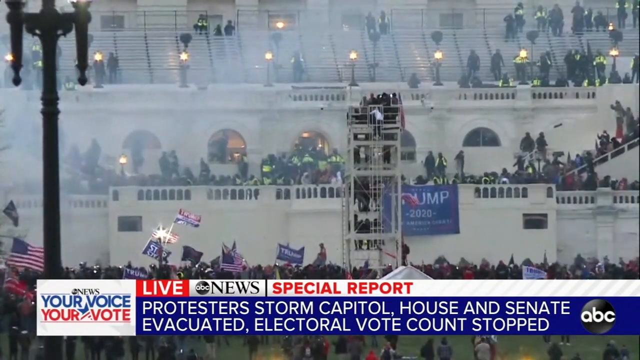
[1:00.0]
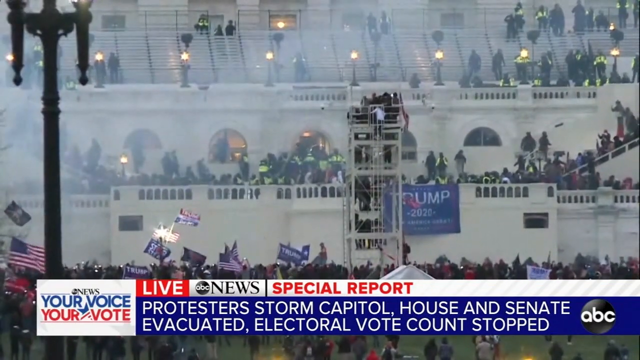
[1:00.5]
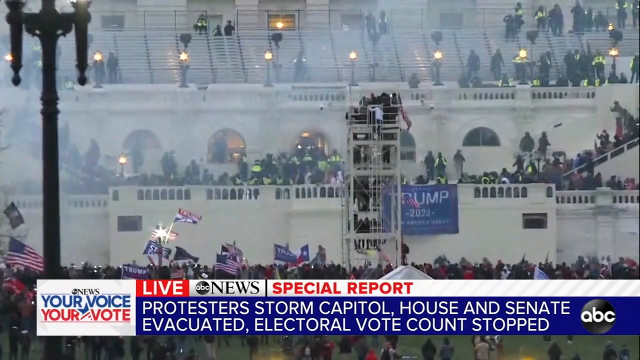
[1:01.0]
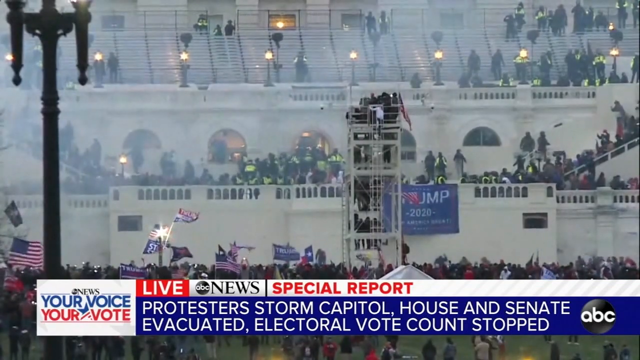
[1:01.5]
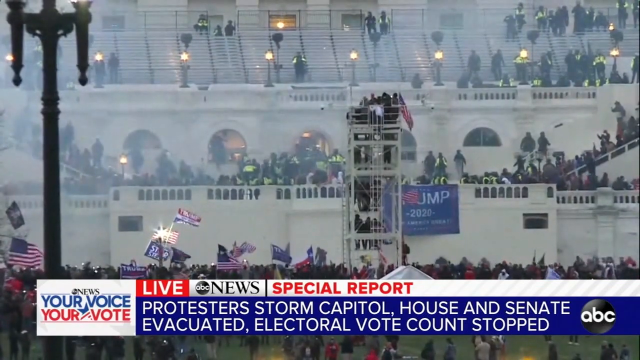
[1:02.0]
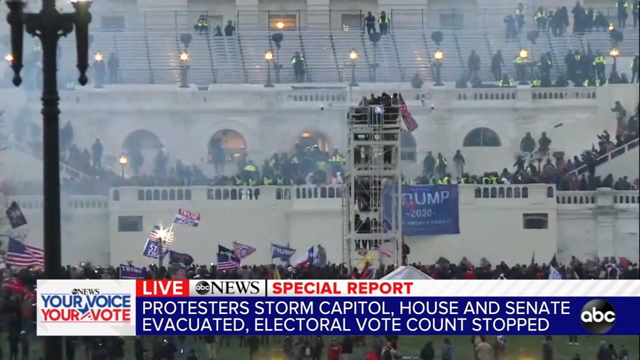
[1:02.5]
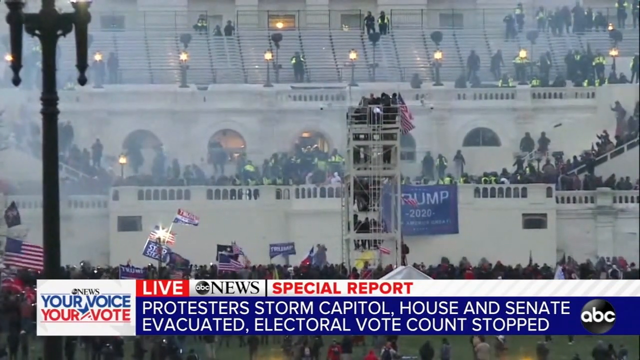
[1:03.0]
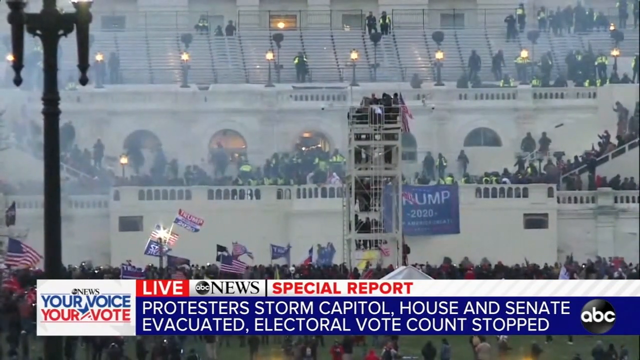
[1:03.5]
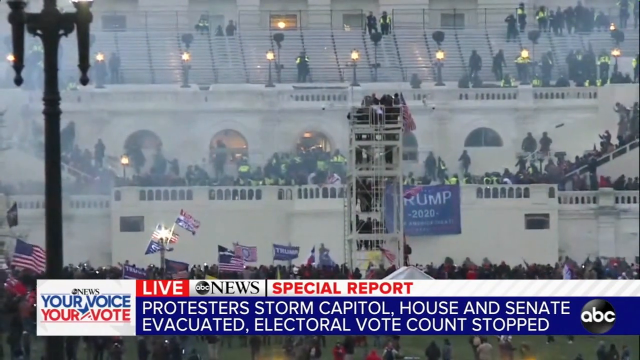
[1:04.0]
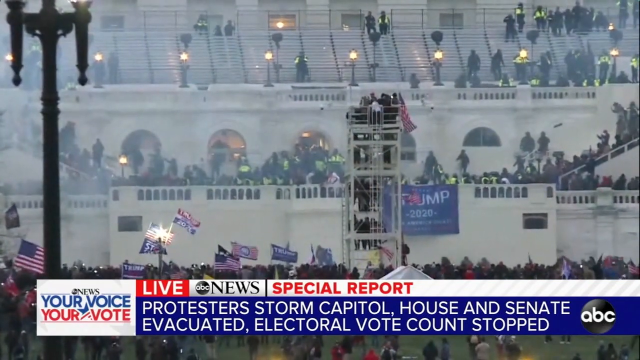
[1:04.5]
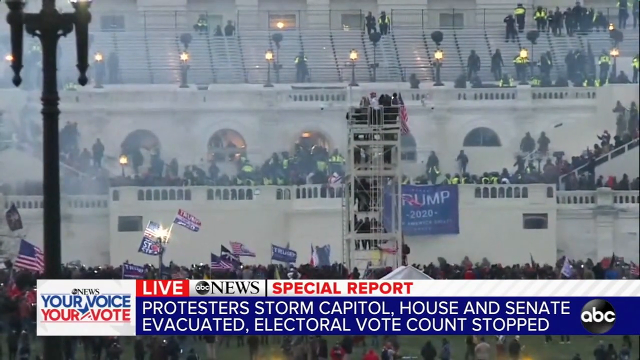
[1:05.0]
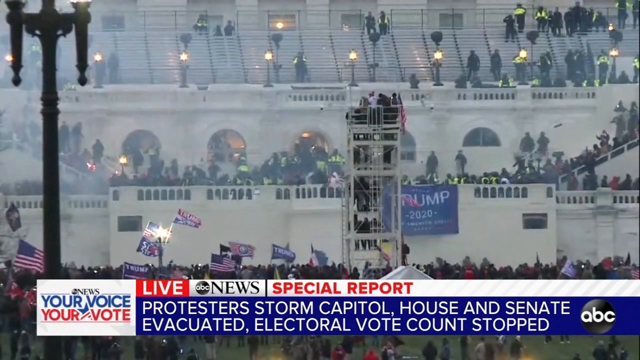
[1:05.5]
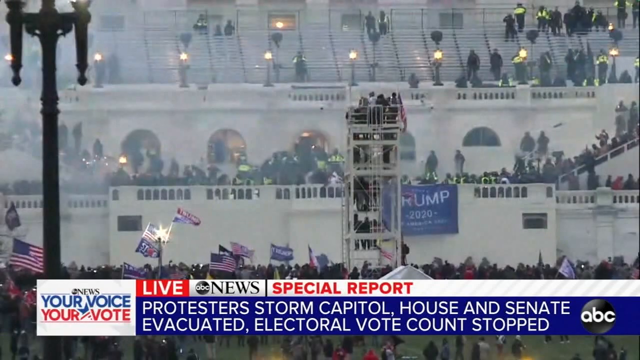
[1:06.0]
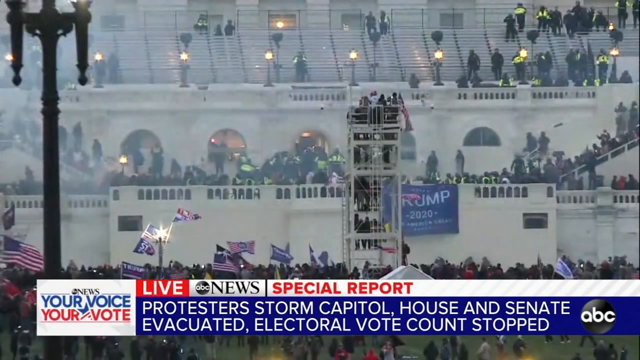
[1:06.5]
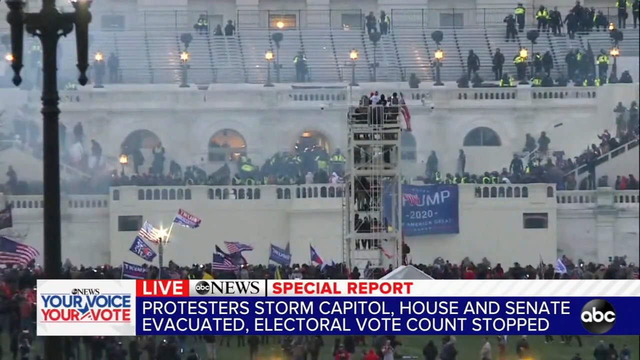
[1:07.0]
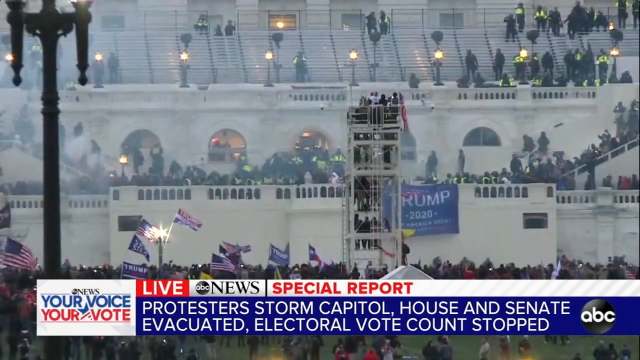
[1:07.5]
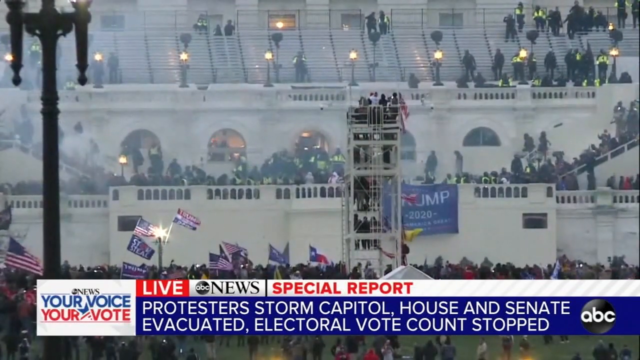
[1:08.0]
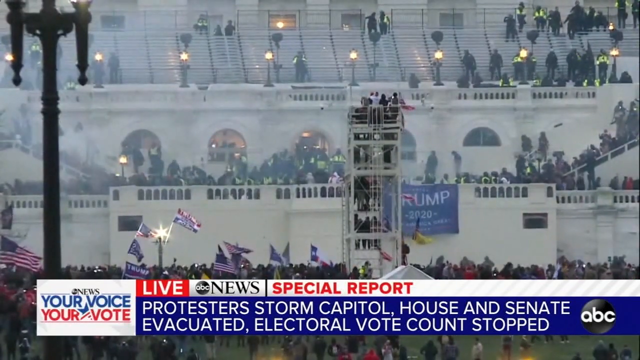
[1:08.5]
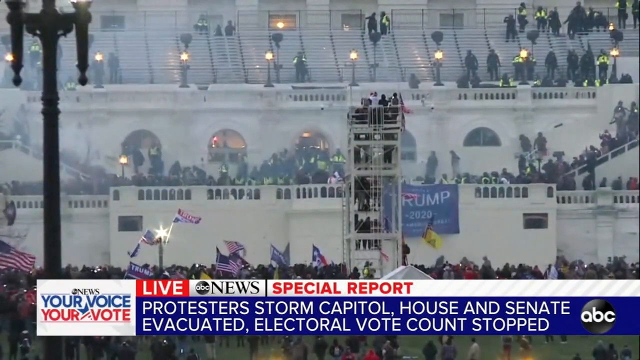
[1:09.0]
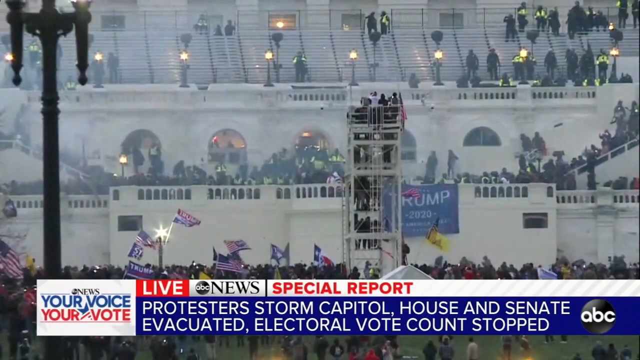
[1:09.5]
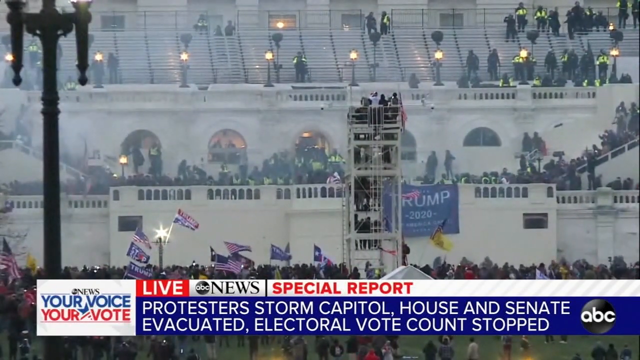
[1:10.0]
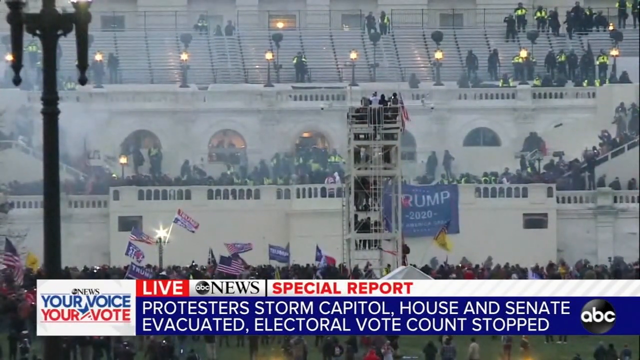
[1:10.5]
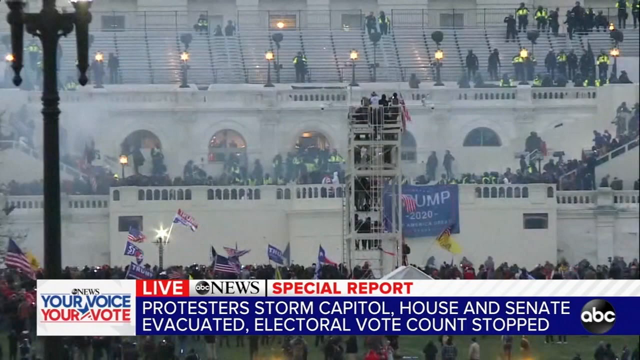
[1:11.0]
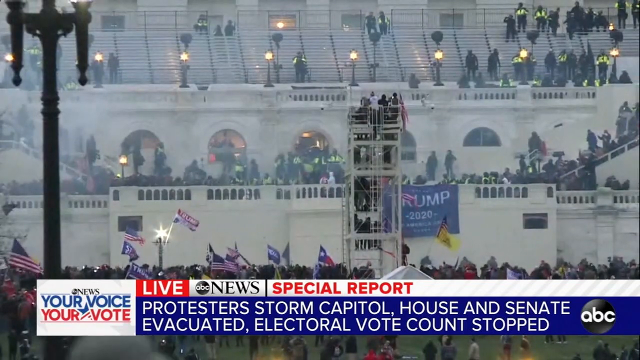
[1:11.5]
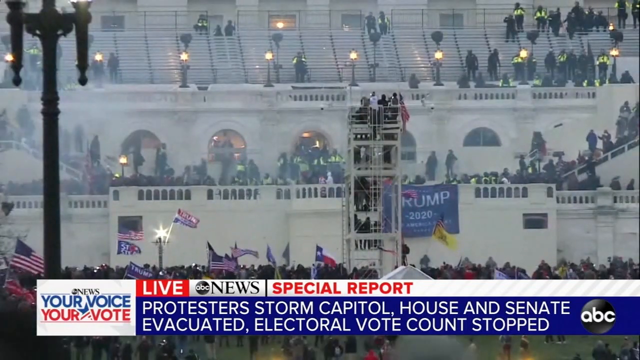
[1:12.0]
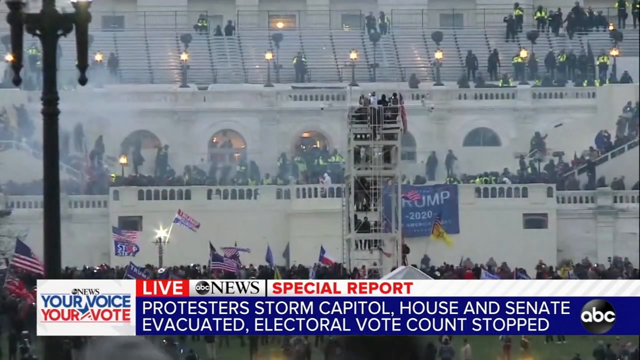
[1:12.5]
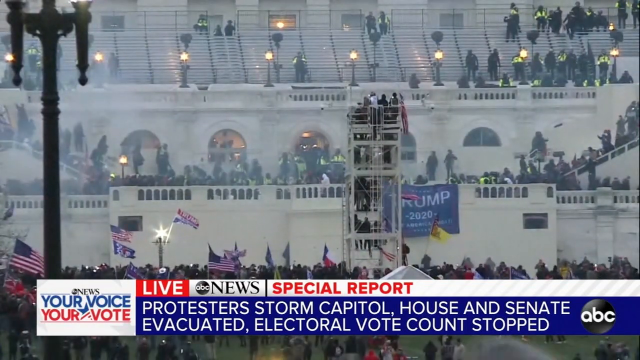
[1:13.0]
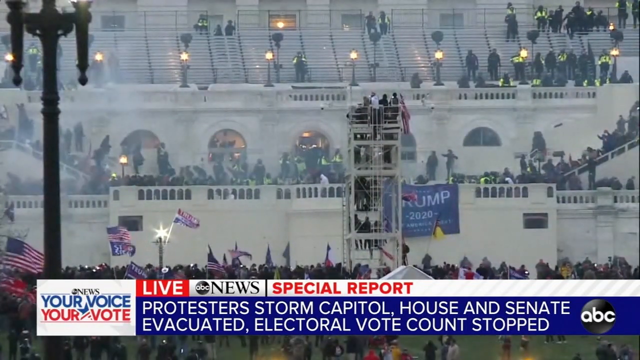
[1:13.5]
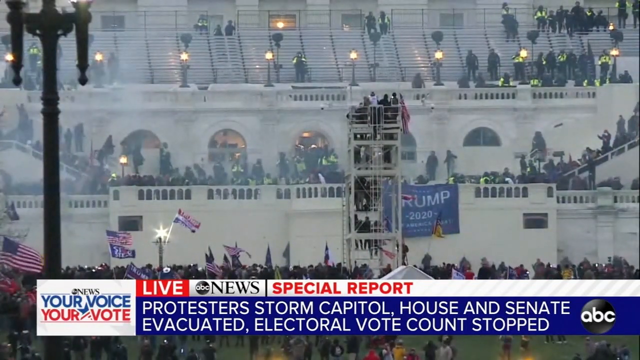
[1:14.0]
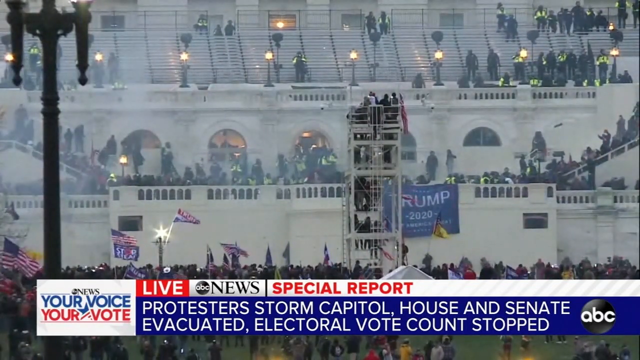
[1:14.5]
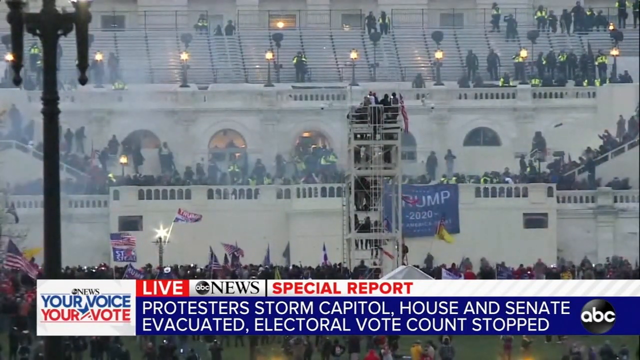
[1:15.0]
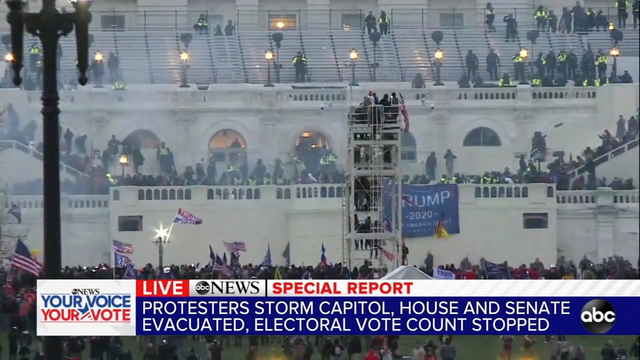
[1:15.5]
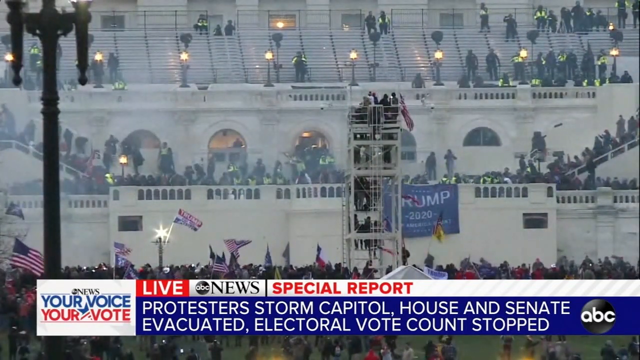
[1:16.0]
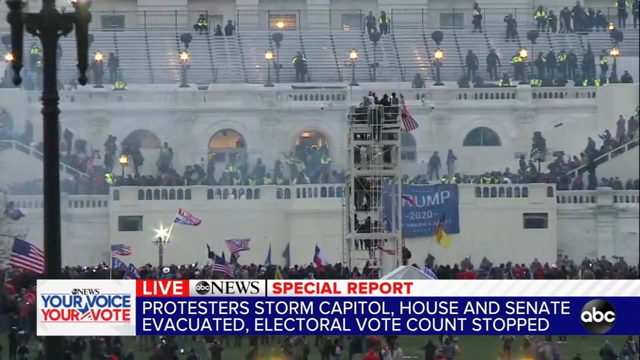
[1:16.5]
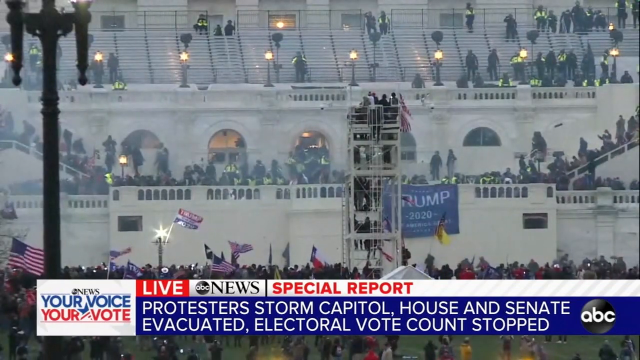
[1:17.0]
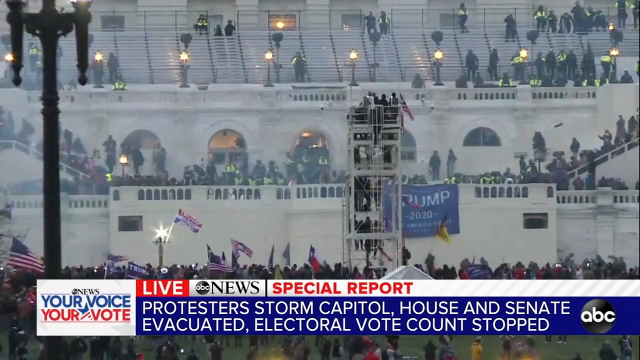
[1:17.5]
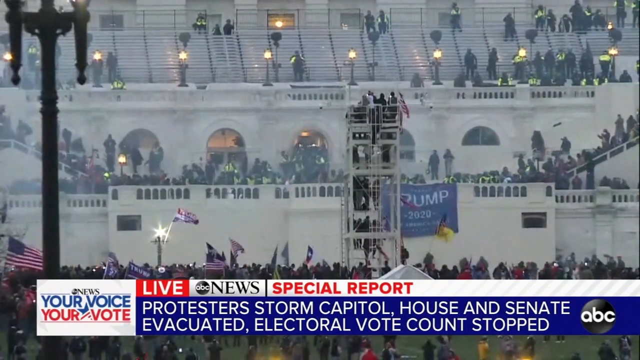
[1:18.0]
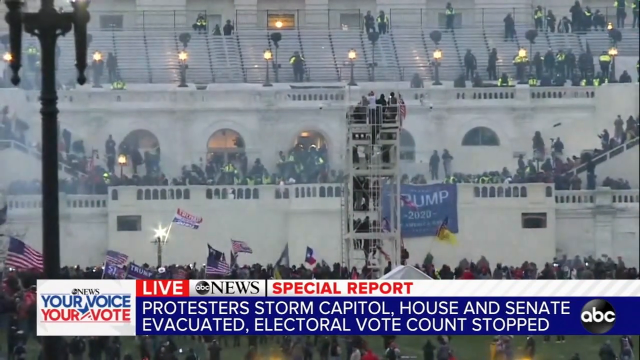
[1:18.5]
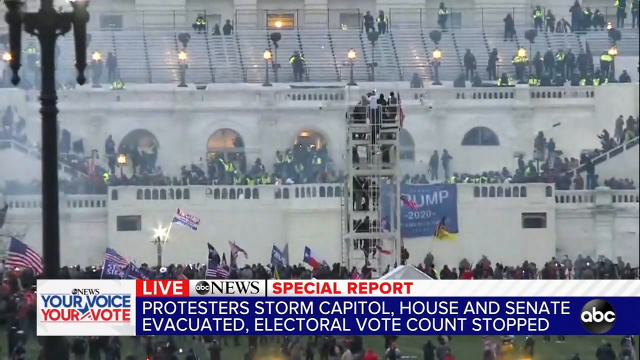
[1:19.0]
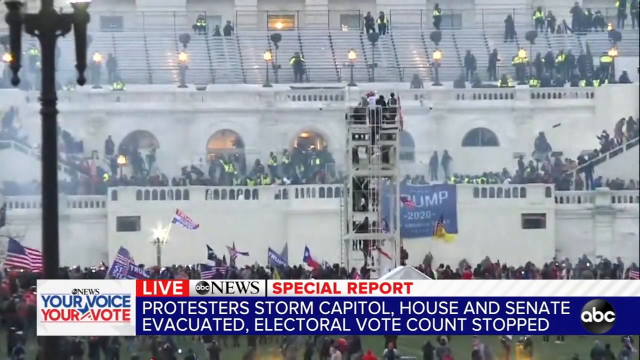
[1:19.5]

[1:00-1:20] The news report continues from outside the protest on Capitol Hill. Police are there. People continue to chant the name Trump and hold their flag upside down.